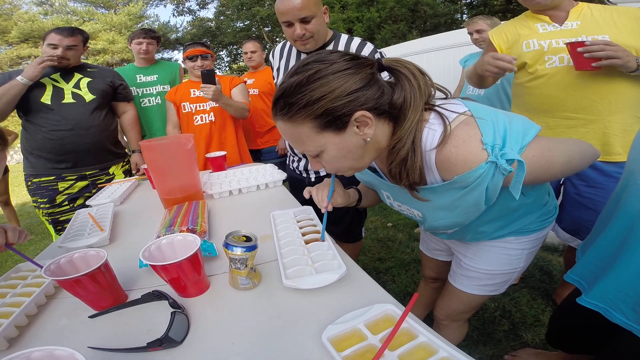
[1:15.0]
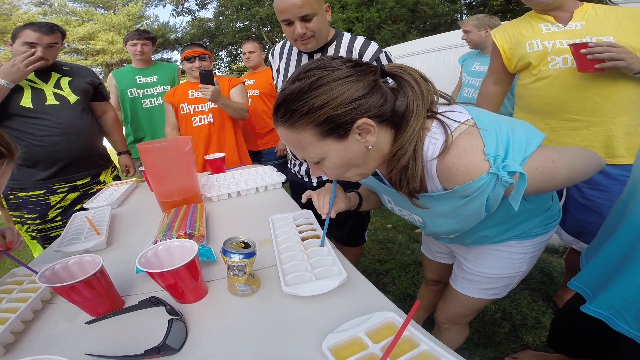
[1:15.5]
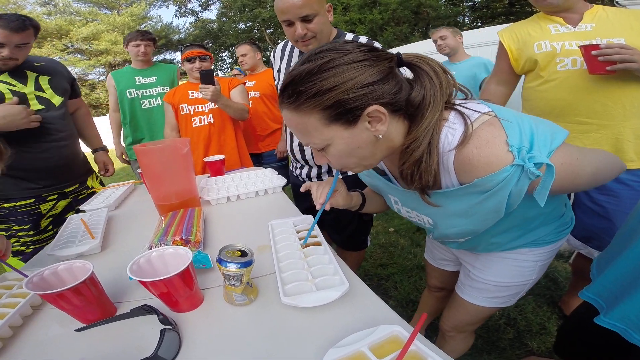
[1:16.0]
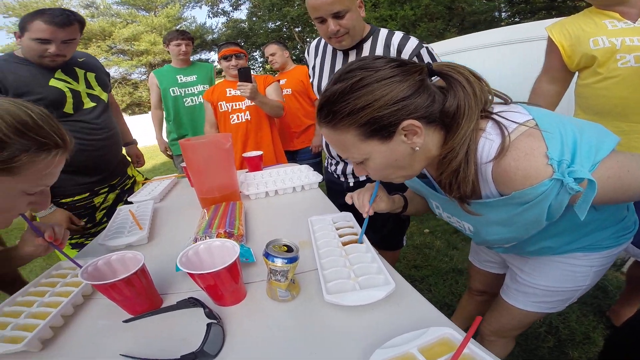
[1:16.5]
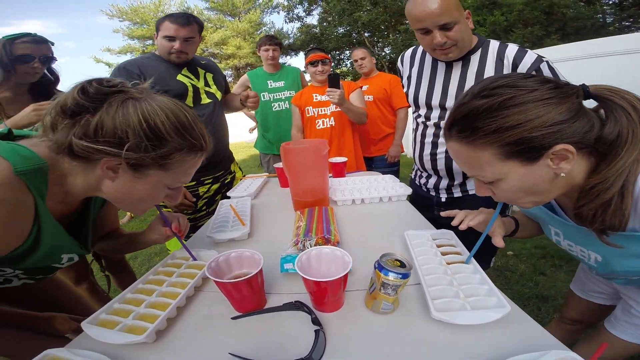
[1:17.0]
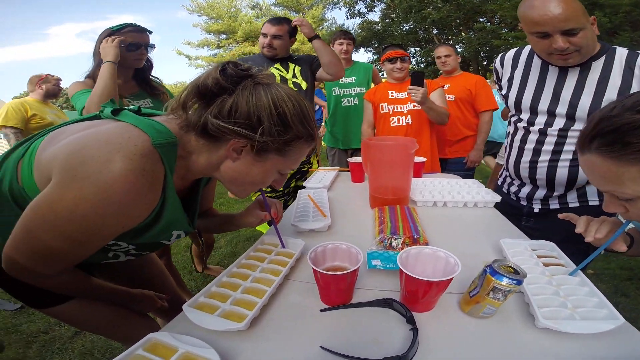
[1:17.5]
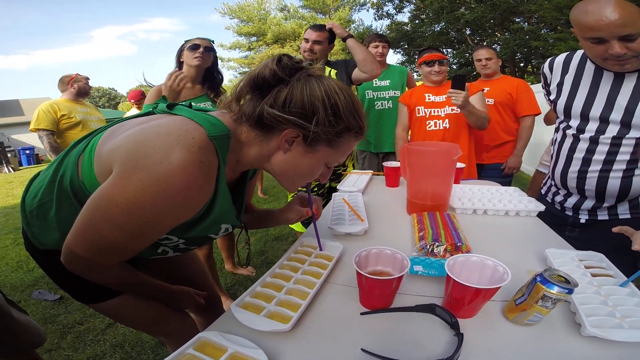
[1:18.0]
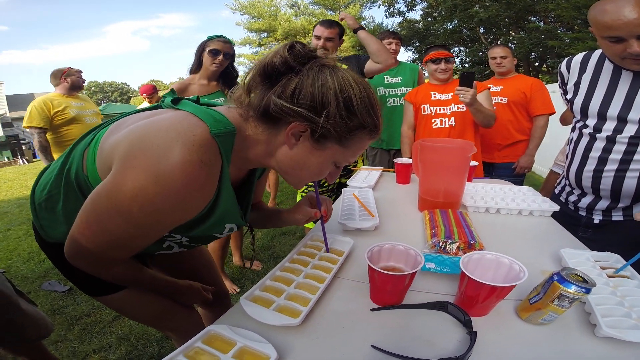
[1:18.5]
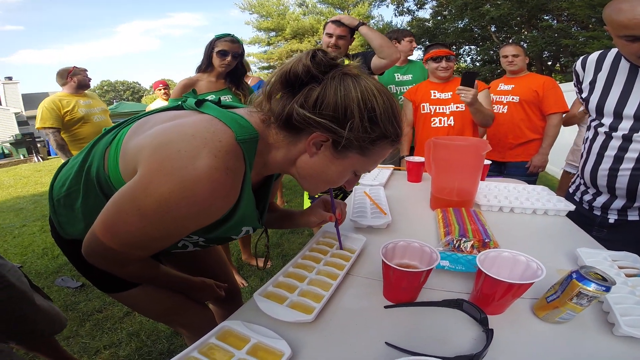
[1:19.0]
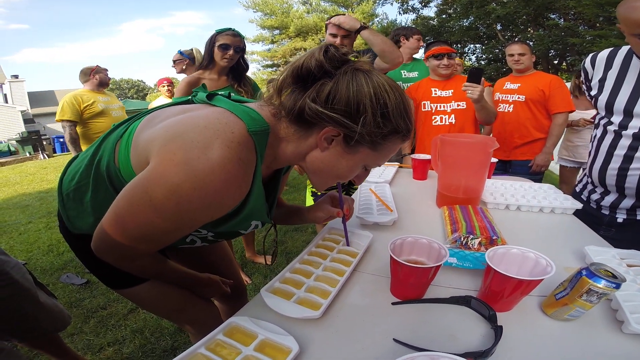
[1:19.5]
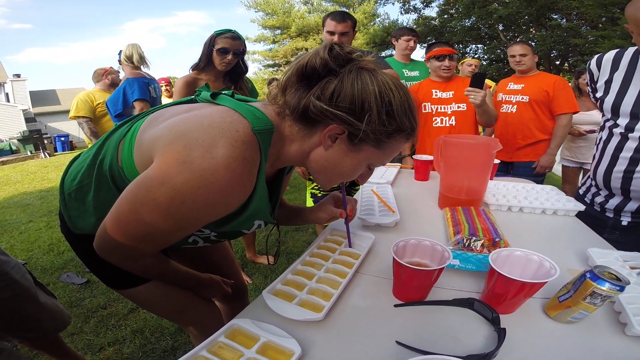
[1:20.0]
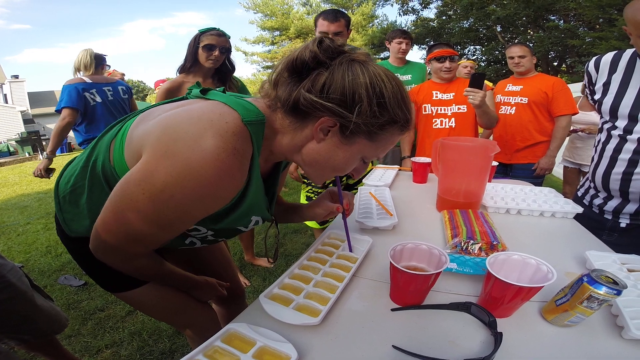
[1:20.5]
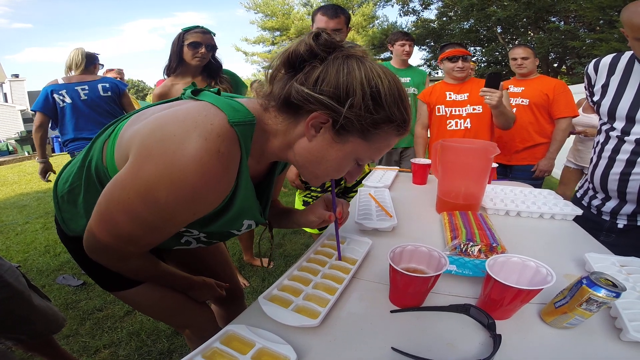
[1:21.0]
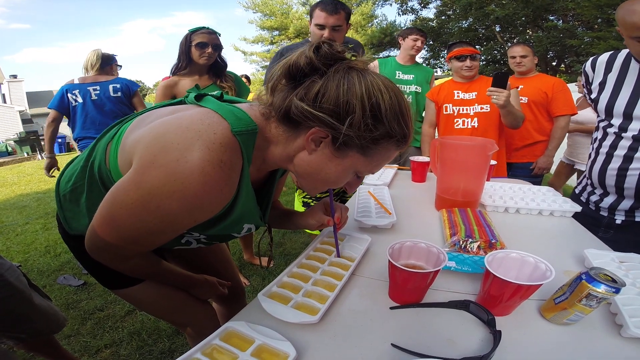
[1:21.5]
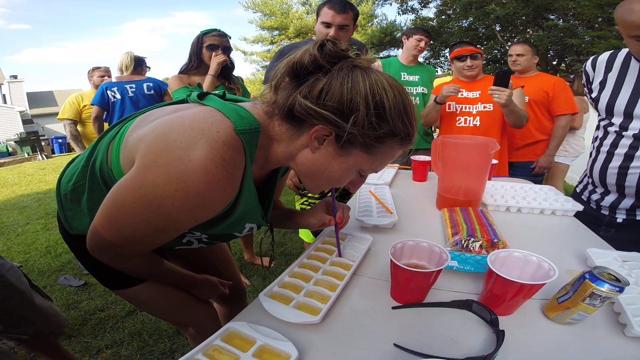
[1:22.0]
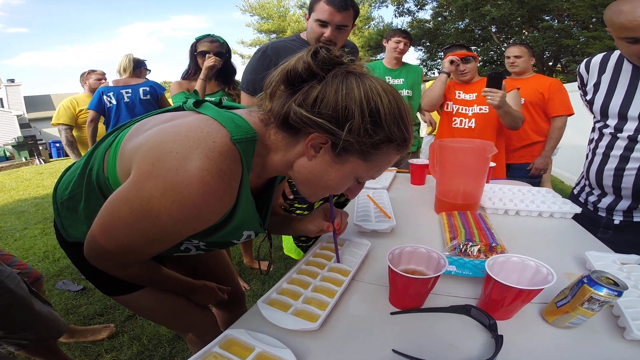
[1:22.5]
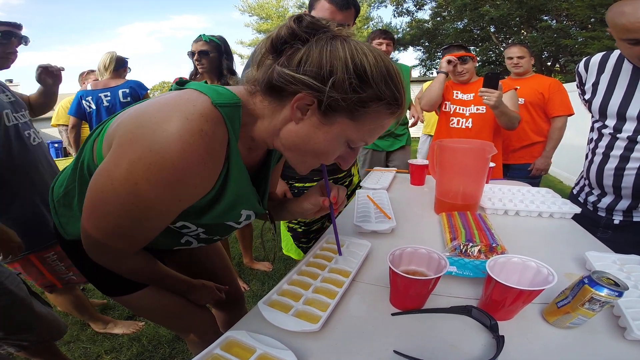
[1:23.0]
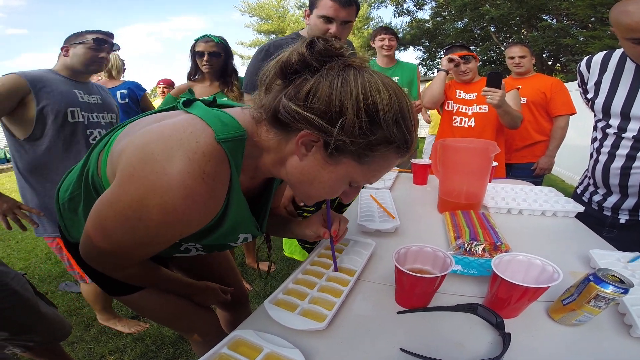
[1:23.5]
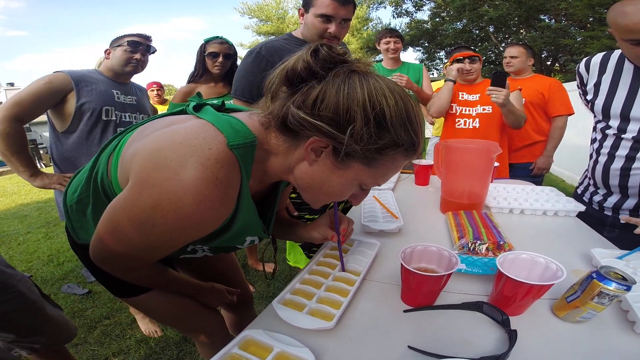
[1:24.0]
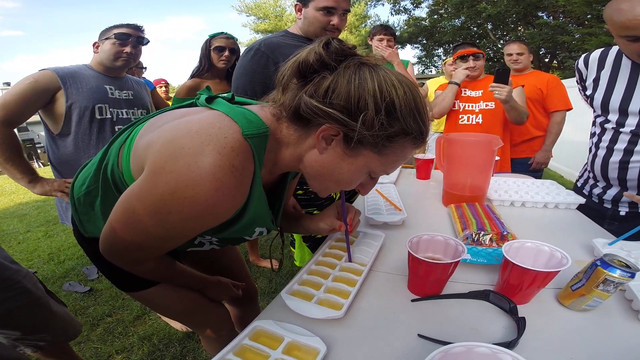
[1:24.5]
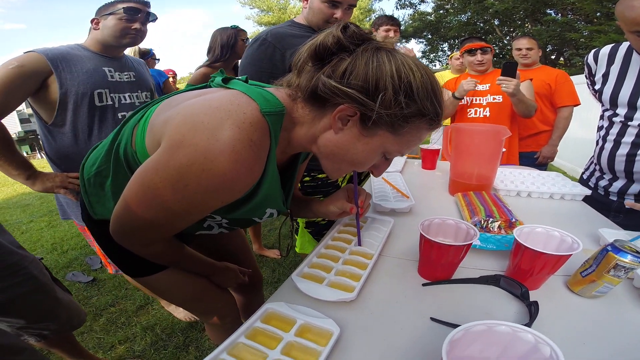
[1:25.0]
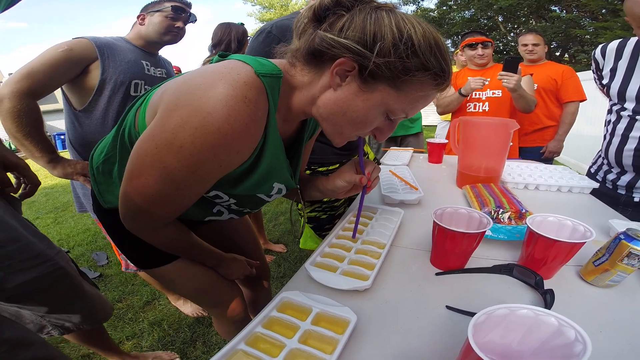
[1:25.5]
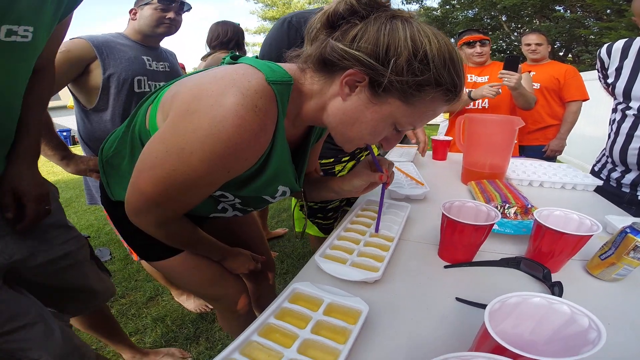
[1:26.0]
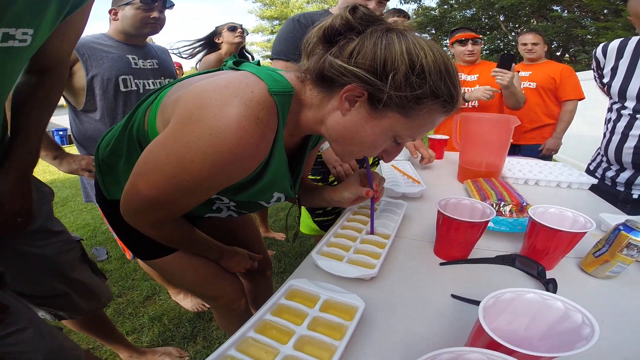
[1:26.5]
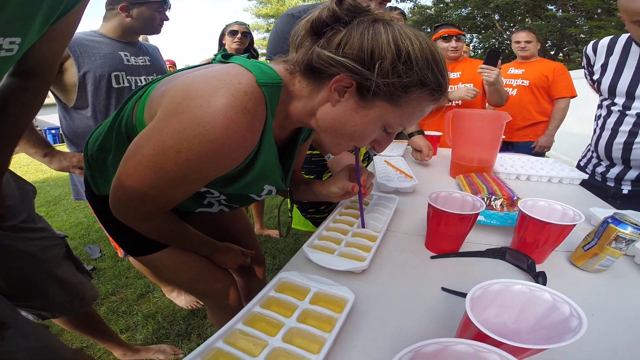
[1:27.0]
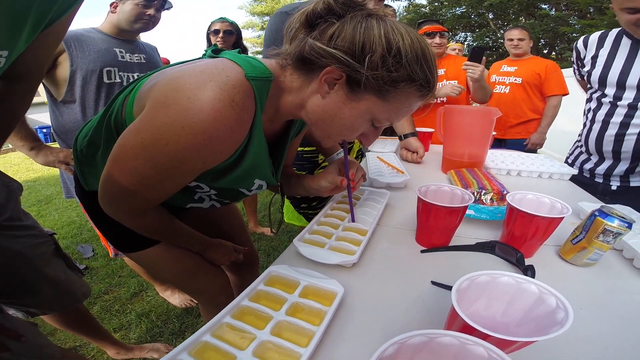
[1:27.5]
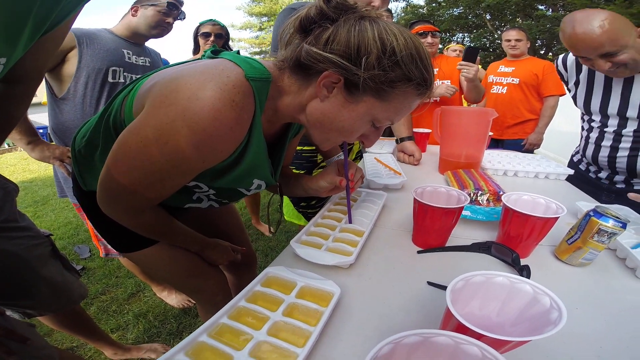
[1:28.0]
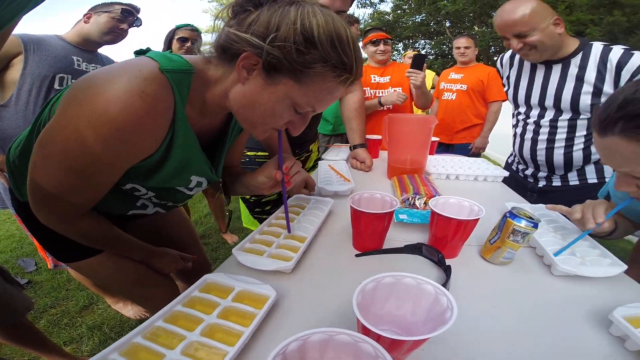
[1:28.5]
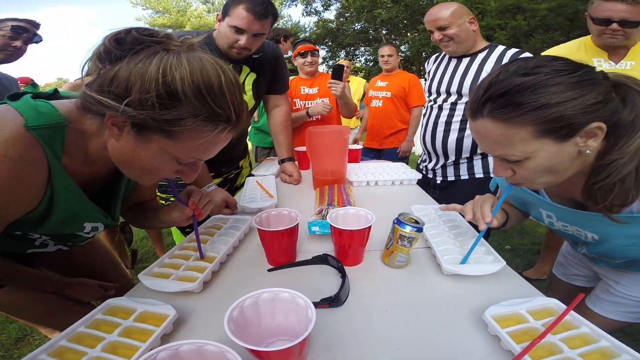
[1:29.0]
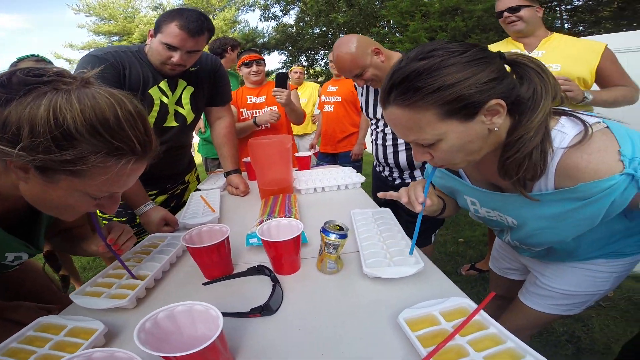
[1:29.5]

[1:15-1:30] A close-up shows the woman on the left side of the table, the third competitor on the green team. She has kind of light brownish hair pulled up in a tight ponytail and leans over, drinking yellow beer from the sections of the ice cube tray with a purple straw. In front of her tray is a red solo cup, visibly half-filled with beer. Behind her is the heavyset man in the black T-shirt with the New York Yankees logo, leaning forward as though he is an official. Across the table from him, the man in the white and black striped referee's jersey stands leaning over the woman in the light blue shirt drinking the dark brown beer, who is just finishing up, probably about 12 sections ahead of the woman across from her. The referee kind of bounces his head back and forth as she finishes, almost as though cheering her on. In the background are a couple of men in orange Beer Olympic shirts; one, with an orange headband, holds up his cell phone and videotapes the performance.